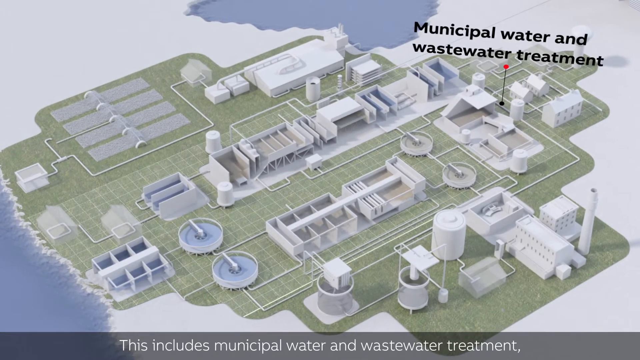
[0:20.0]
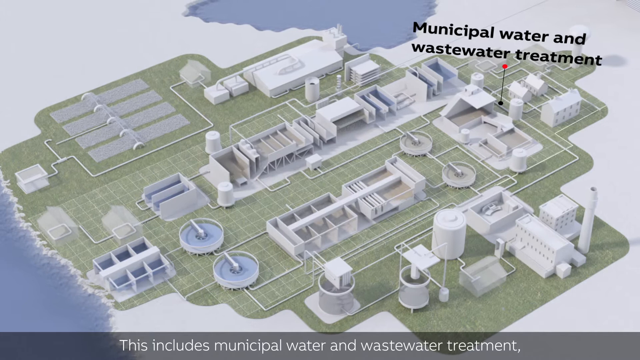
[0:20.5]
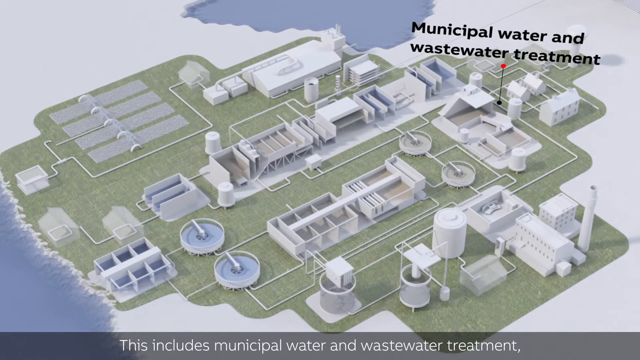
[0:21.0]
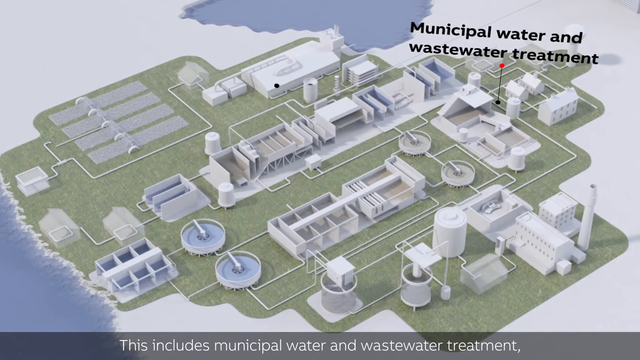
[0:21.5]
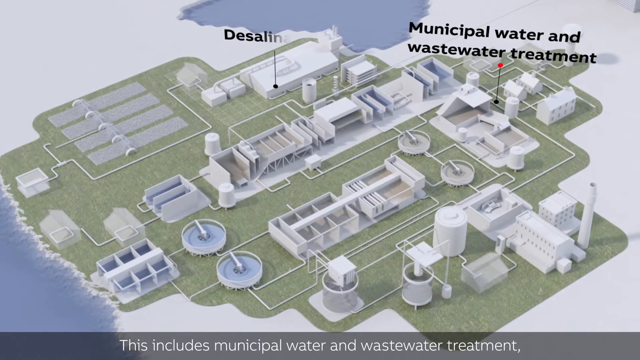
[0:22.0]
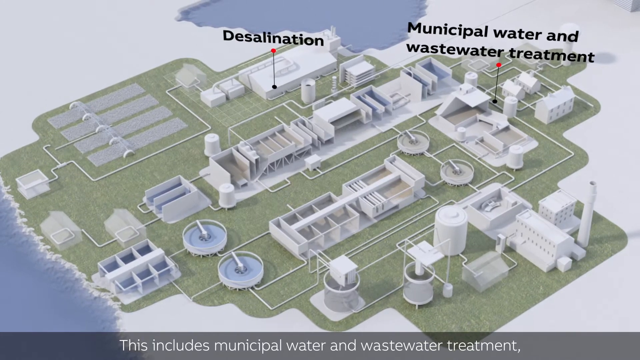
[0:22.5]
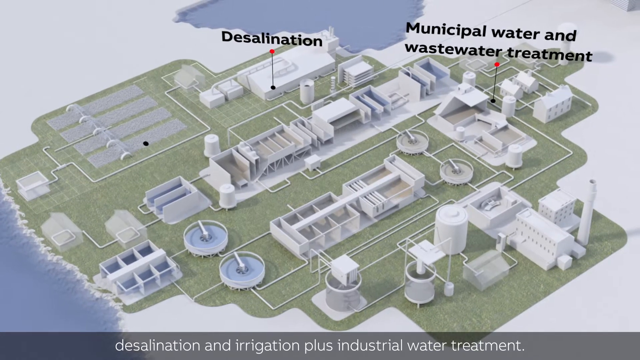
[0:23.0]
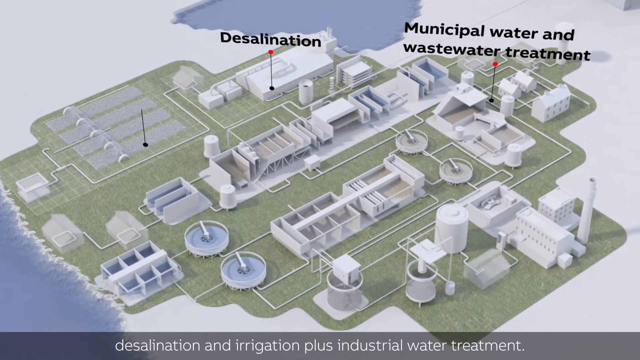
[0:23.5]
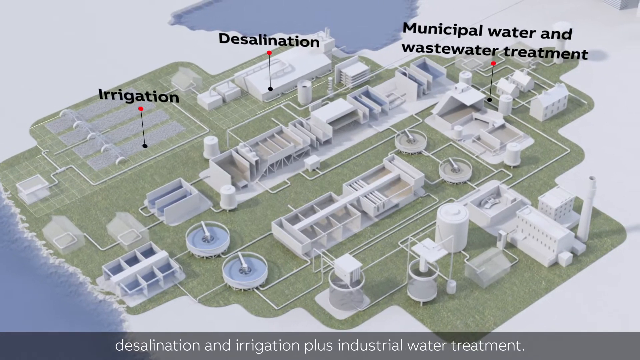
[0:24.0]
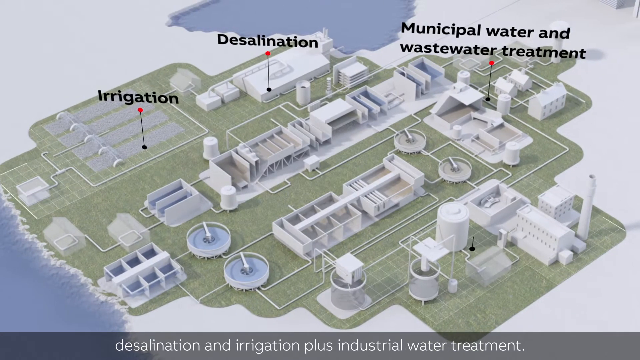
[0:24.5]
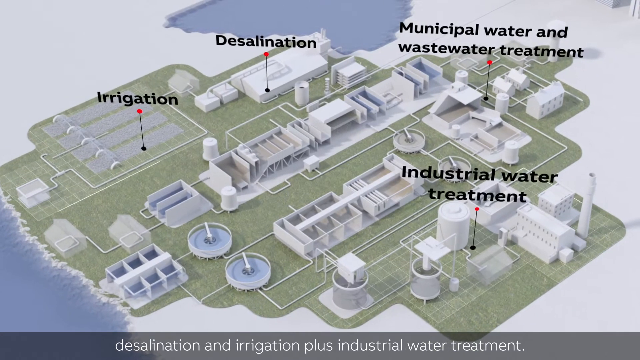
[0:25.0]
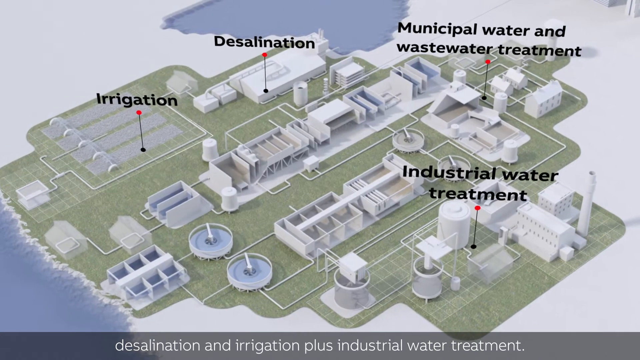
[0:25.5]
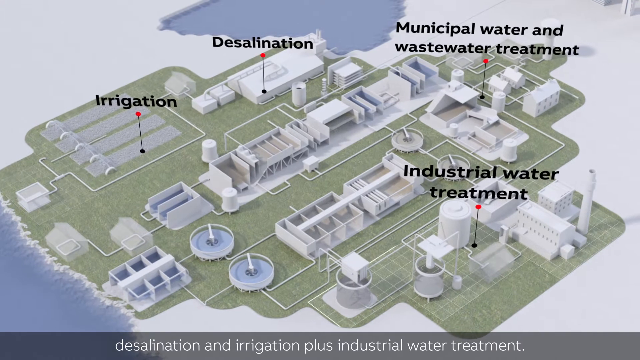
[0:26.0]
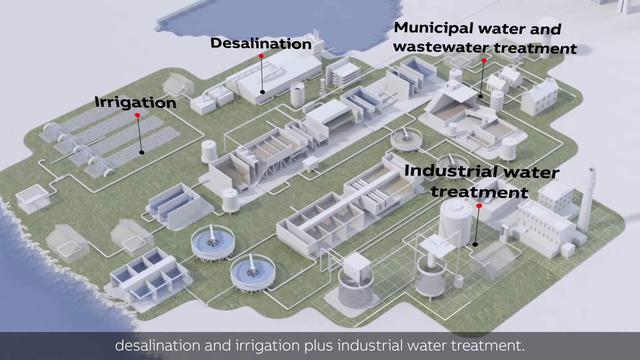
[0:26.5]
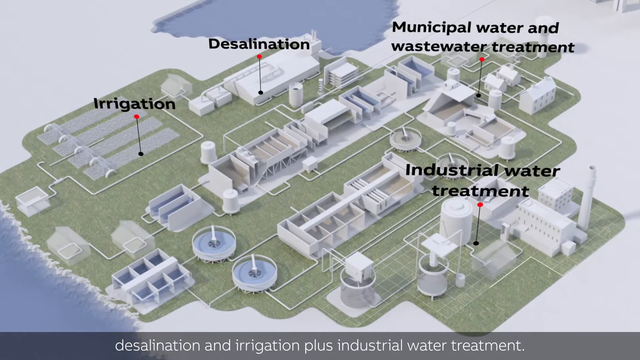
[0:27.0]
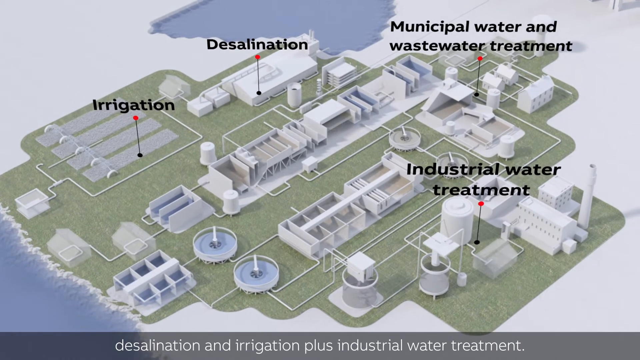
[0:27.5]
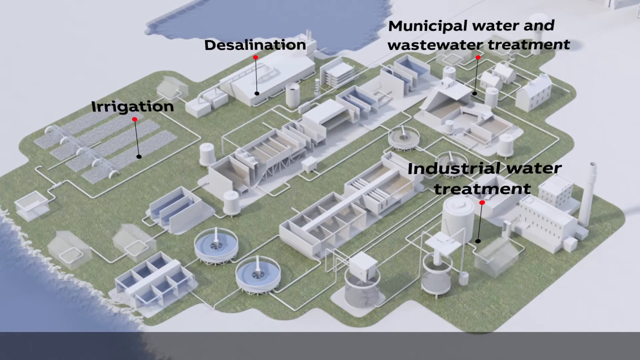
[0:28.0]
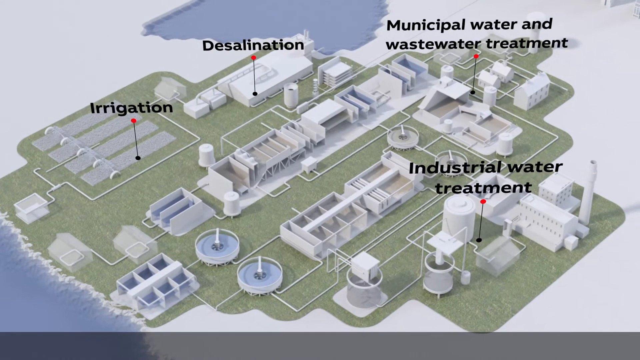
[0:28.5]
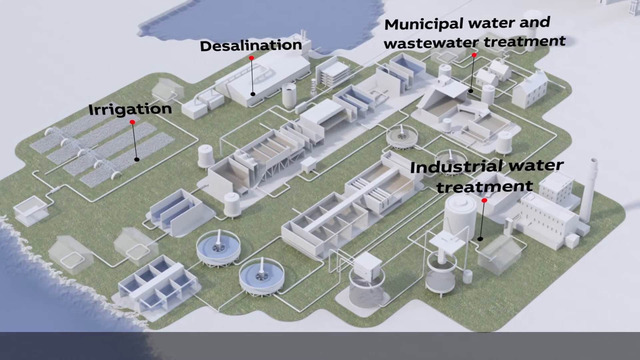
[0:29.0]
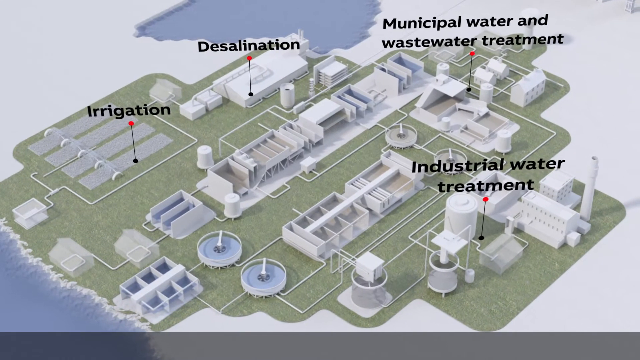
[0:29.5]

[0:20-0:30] A diagram of demand and supply shows the pipes and how much water is supplied in a town. It looks like a big town with big buildings. Industry appears on the large diagram, along with irrigation, industrial water treatment and desalination. No humans or animals can be seen on the diagram.